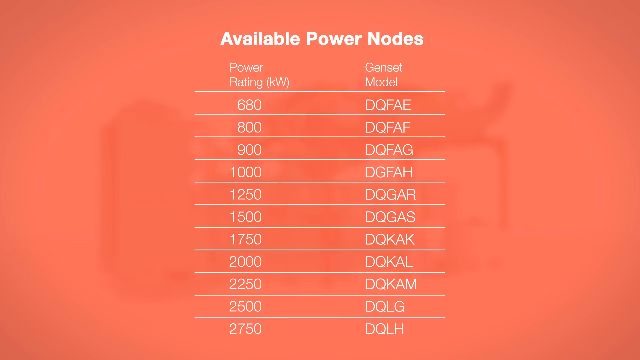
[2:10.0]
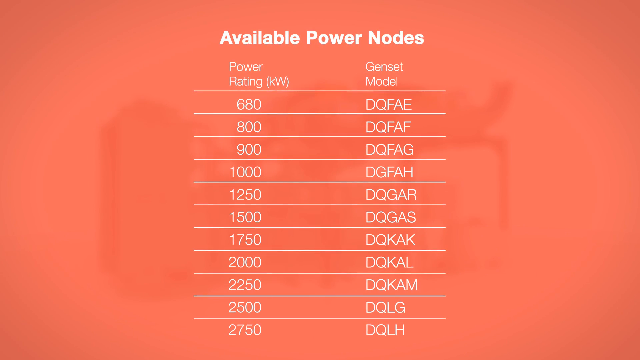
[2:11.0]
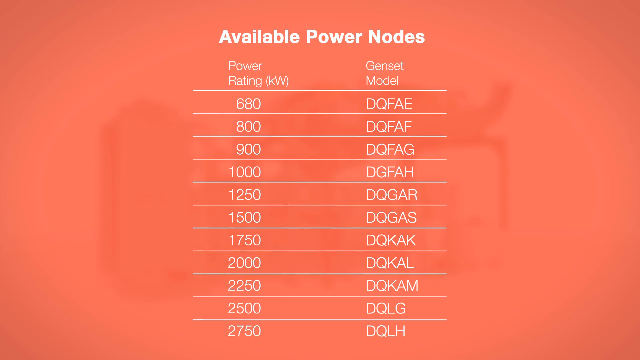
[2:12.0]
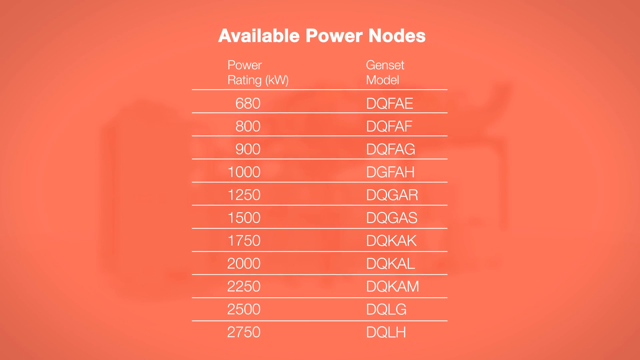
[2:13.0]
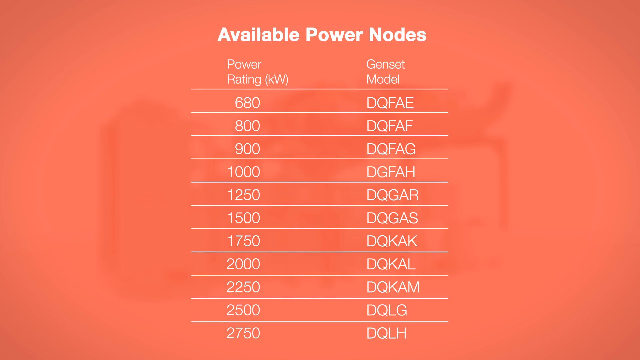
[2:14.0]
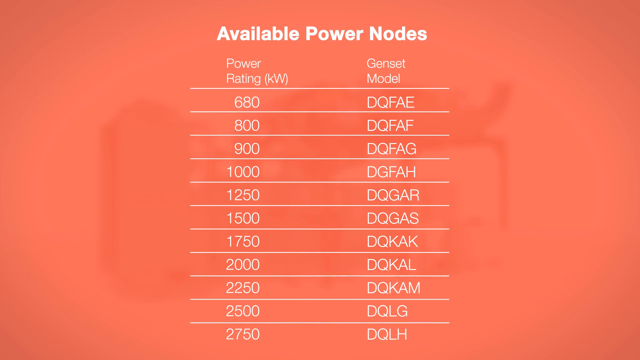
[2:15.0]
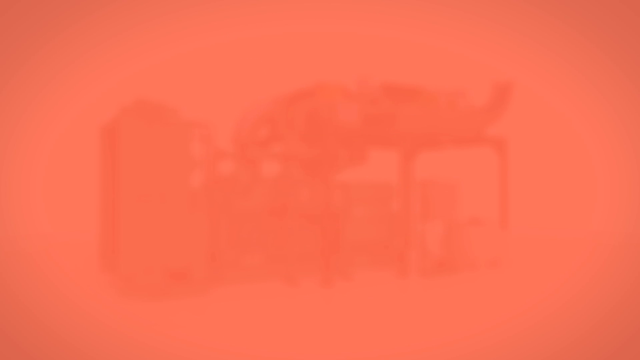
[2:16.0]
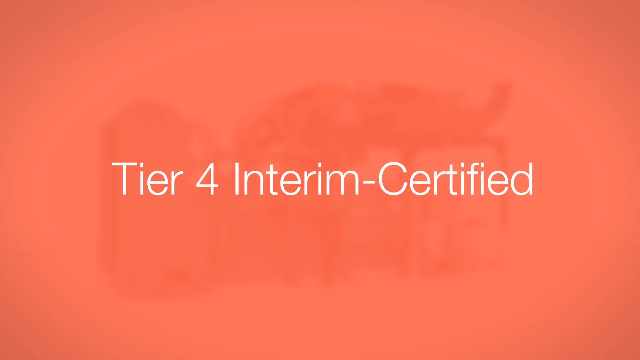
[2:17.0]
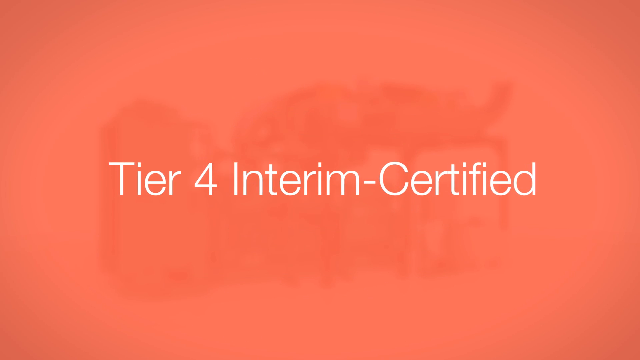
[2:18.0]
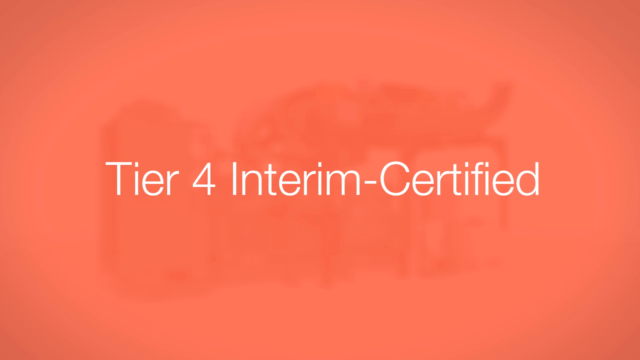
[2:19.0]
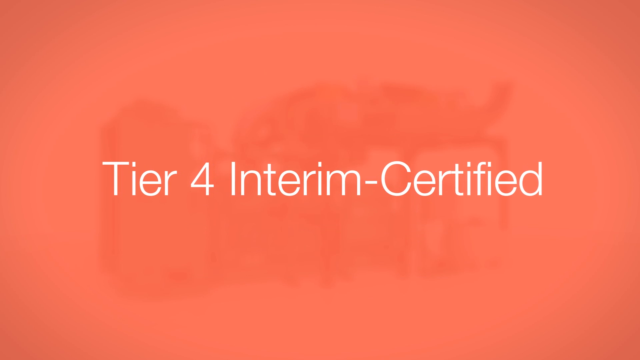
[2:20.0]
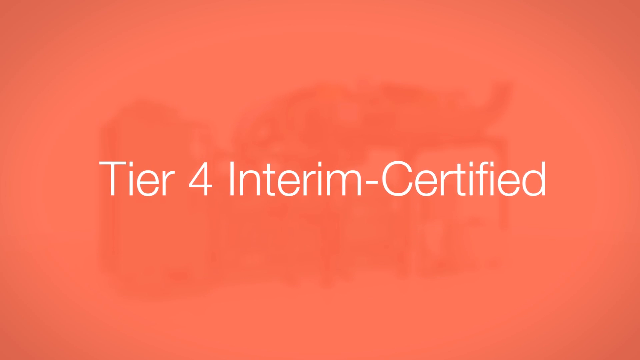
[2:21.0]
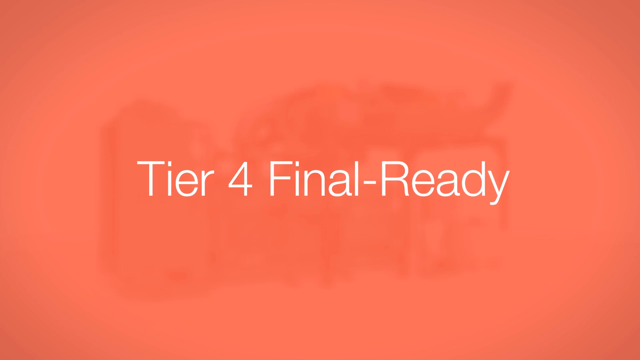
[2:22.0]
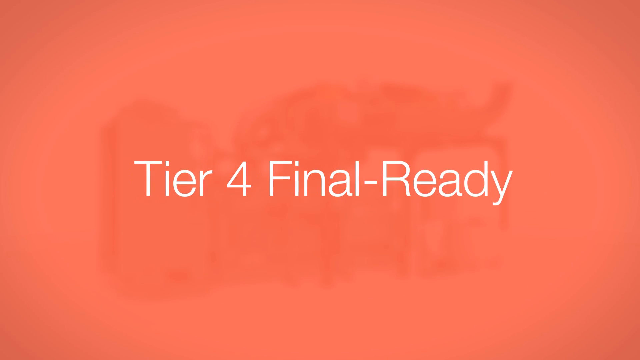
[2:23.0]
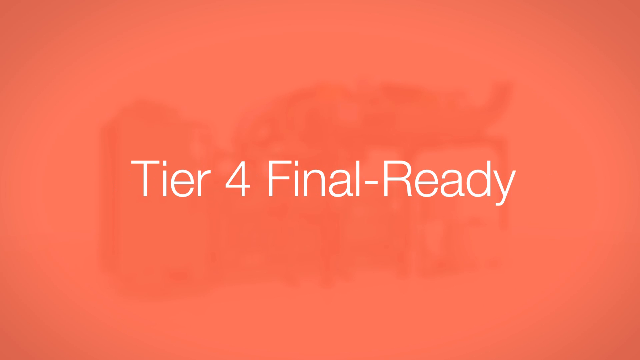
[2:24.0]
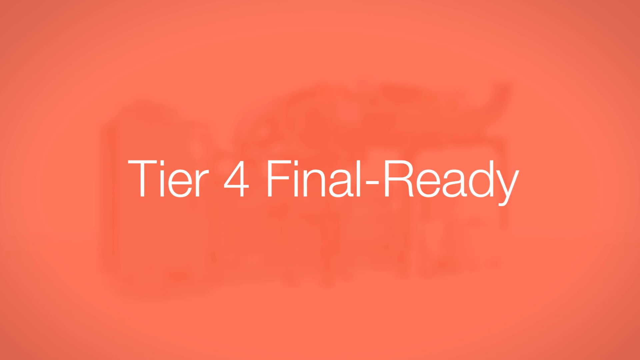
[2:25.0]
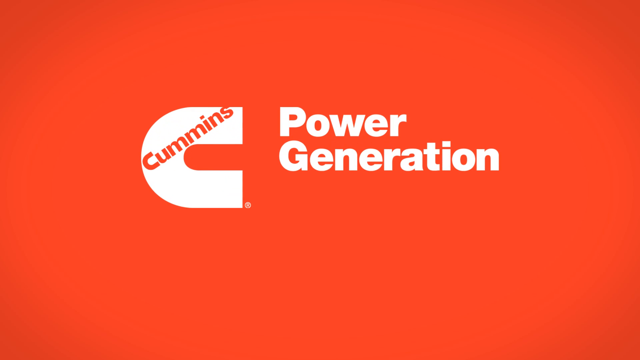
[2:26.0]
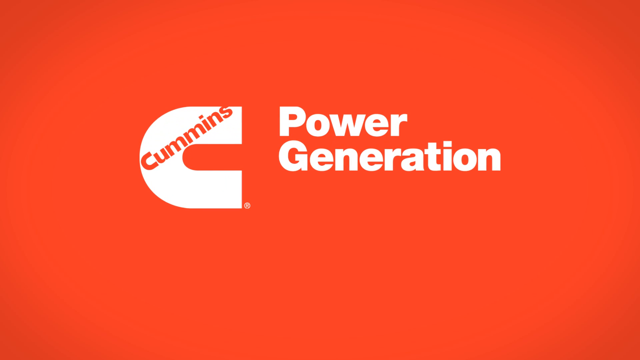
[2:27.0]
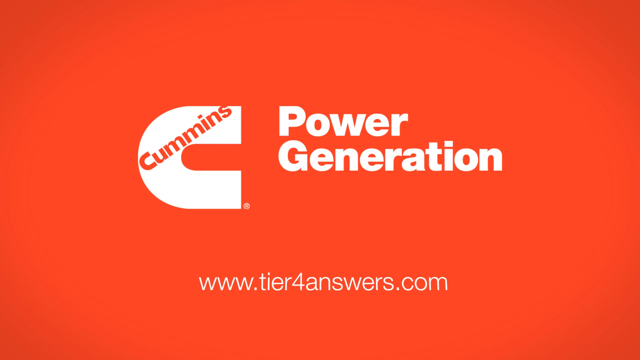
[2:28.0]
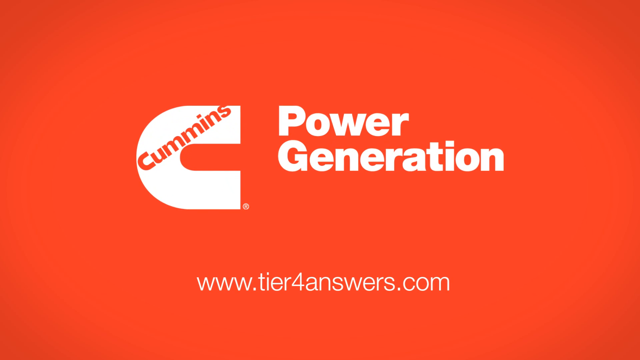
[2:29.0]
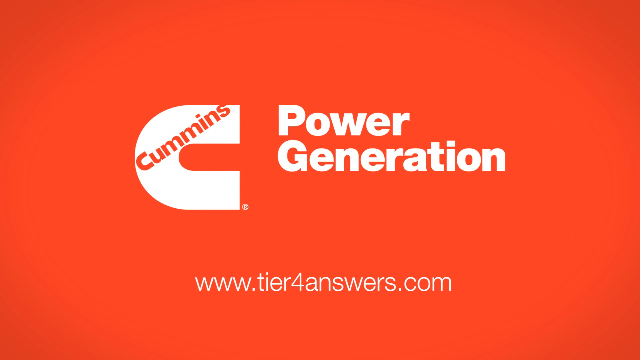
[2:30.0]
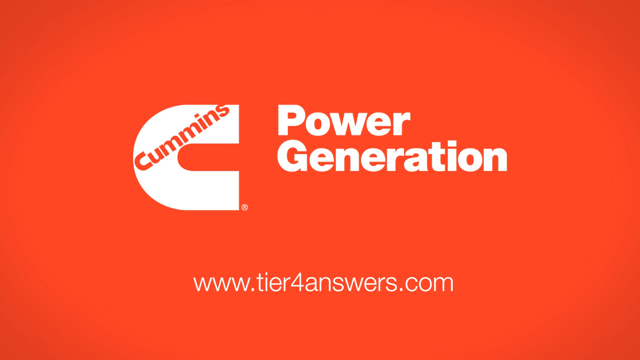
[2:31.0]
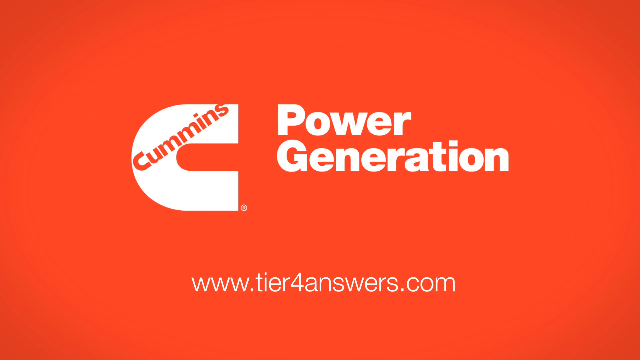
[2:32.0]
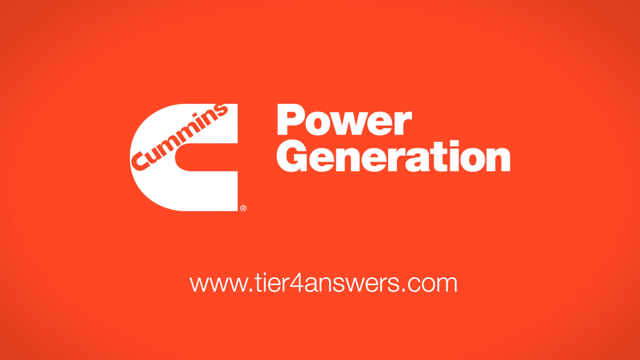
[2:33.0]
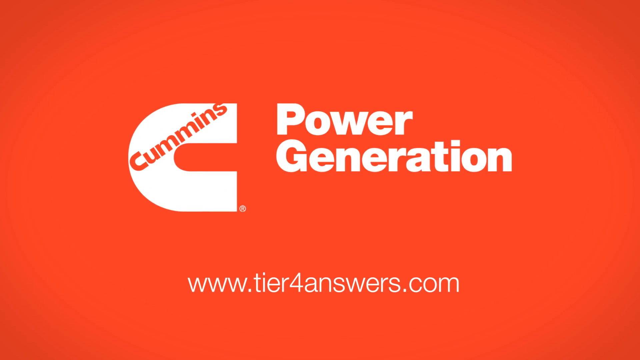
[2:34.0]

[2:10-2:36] The table of available power nodes stays on screen and then fades out. White text reads "tier 4 interim certified," then the words kind of flip over in a transition to "tier 4 final ready," and flip over again to the logo: "power generation" in white text on a solid red background. On the left side is what looks to be a magnet with its ends facing right, on the top half "Cummins" is written diagonally in red text, and at the bottom is "www.tier4answers.com." This screen stays for a few seconds before fading to an entirely white background. When the image of the structure faded to red, the red was more of an orangey red that slowly became darker until the logo appeared.